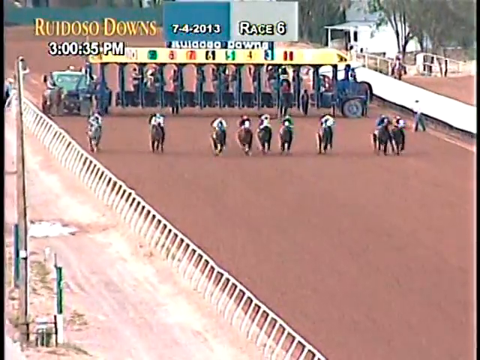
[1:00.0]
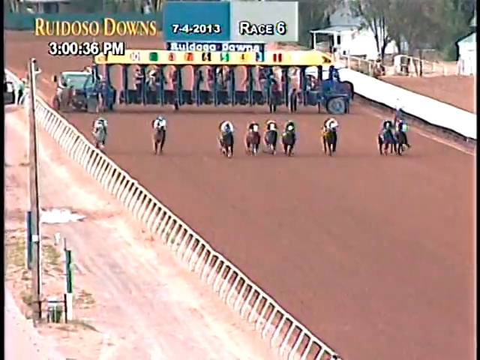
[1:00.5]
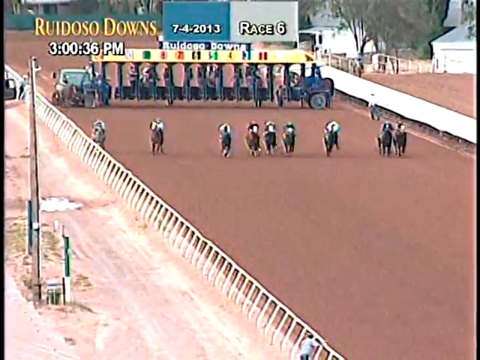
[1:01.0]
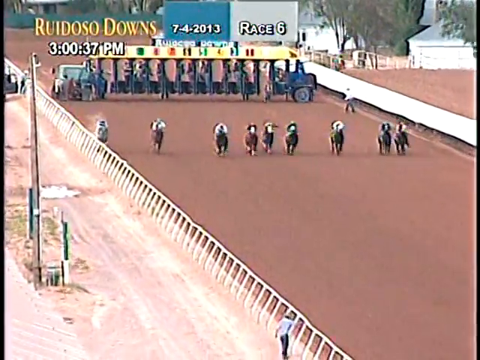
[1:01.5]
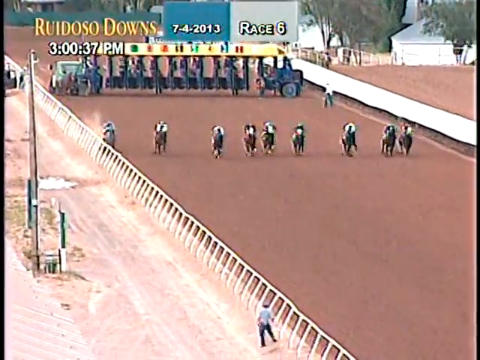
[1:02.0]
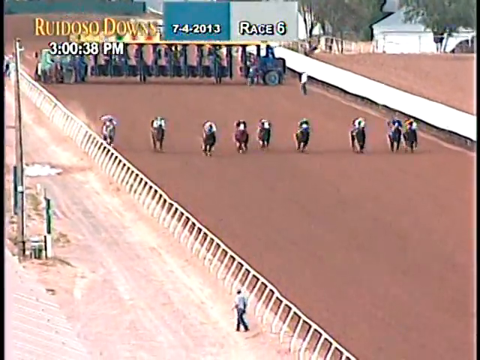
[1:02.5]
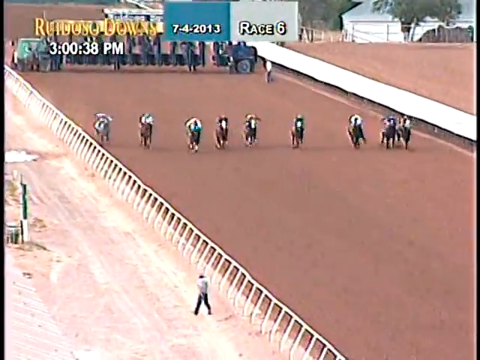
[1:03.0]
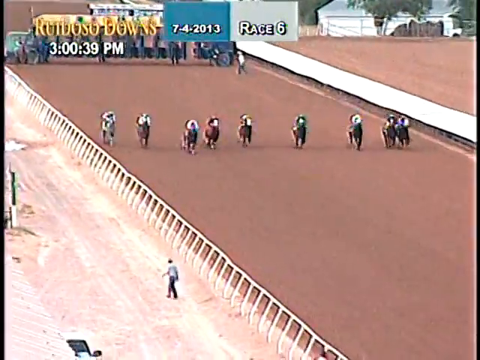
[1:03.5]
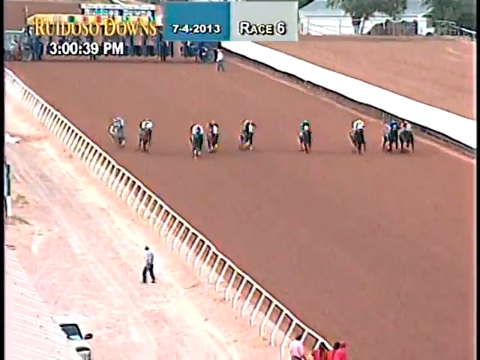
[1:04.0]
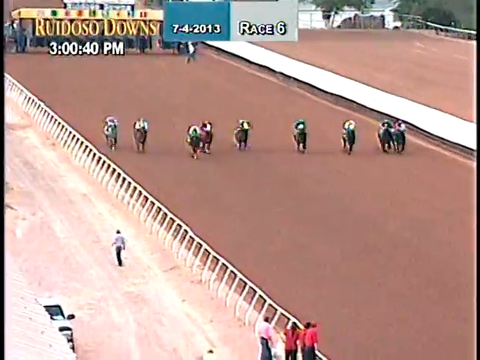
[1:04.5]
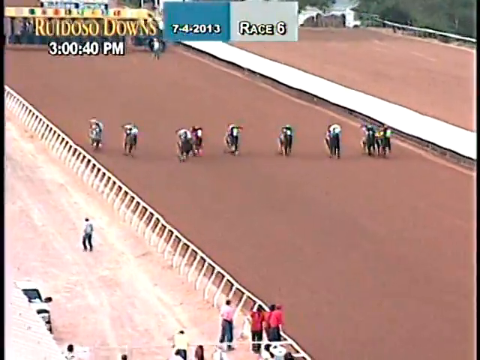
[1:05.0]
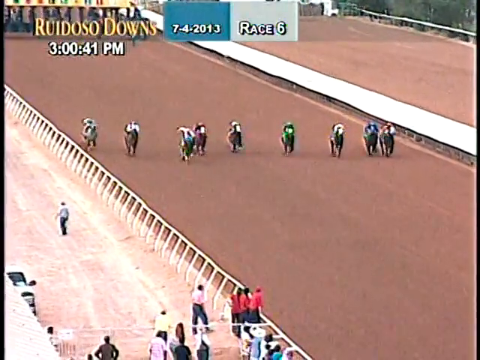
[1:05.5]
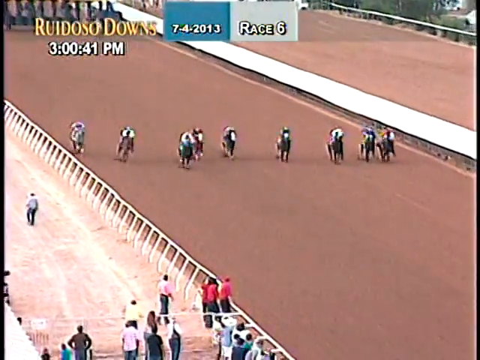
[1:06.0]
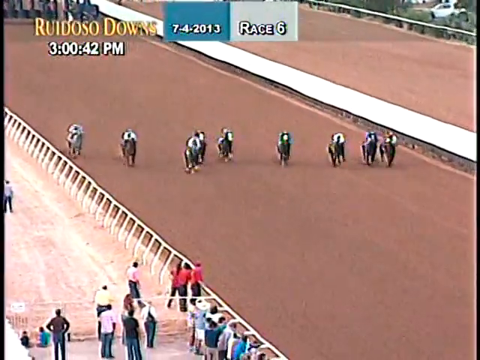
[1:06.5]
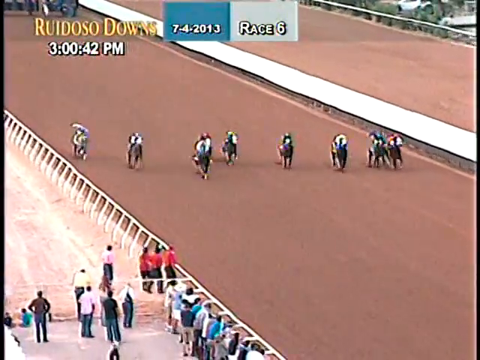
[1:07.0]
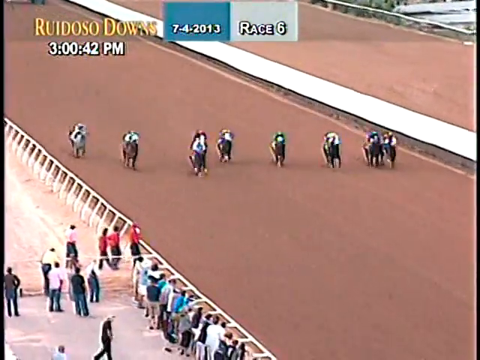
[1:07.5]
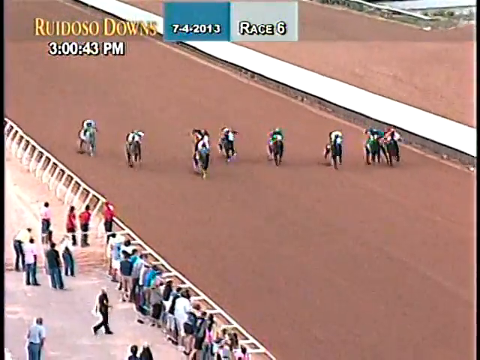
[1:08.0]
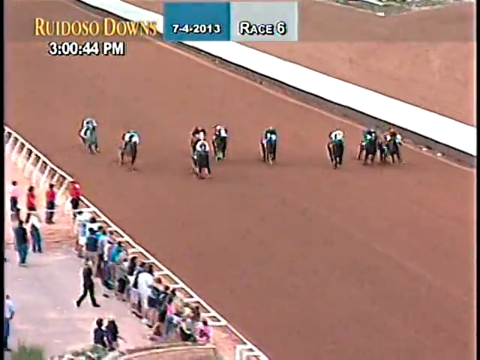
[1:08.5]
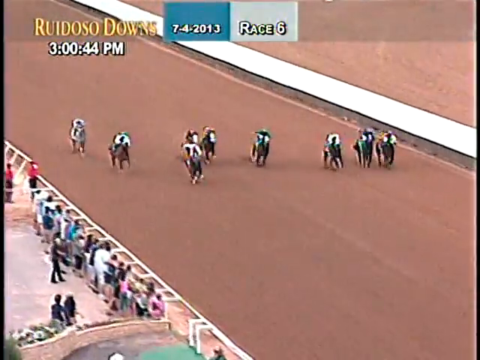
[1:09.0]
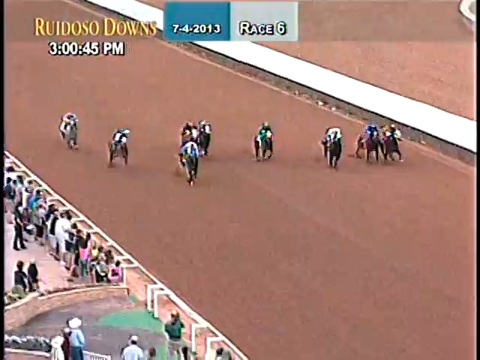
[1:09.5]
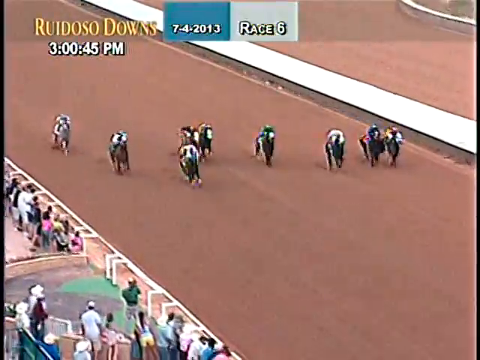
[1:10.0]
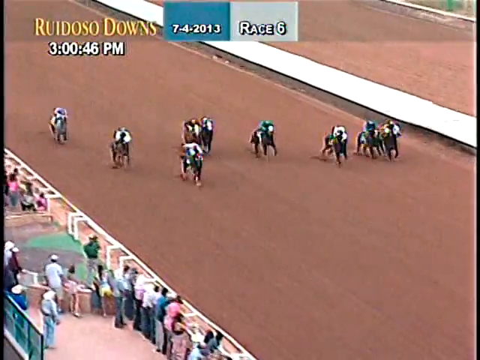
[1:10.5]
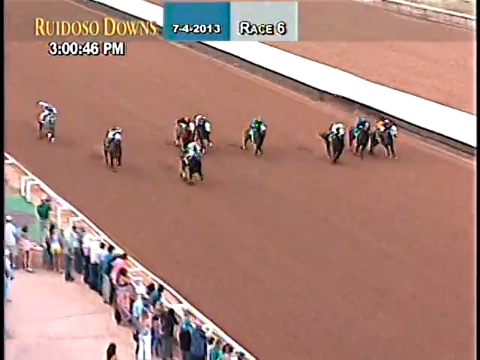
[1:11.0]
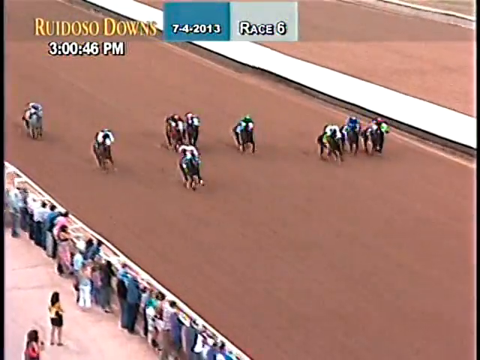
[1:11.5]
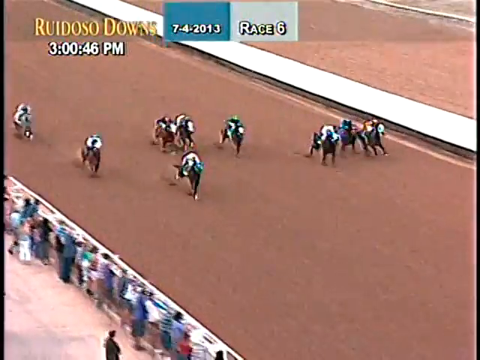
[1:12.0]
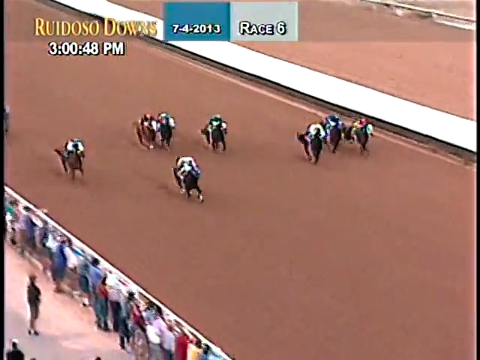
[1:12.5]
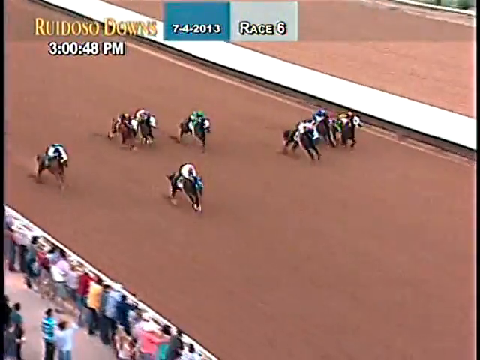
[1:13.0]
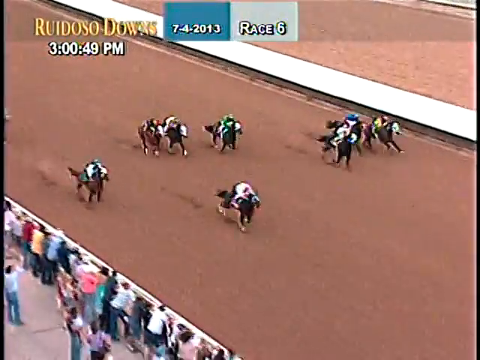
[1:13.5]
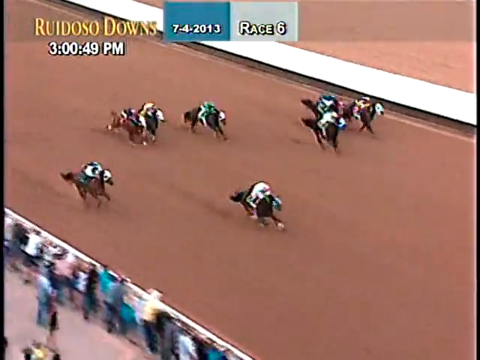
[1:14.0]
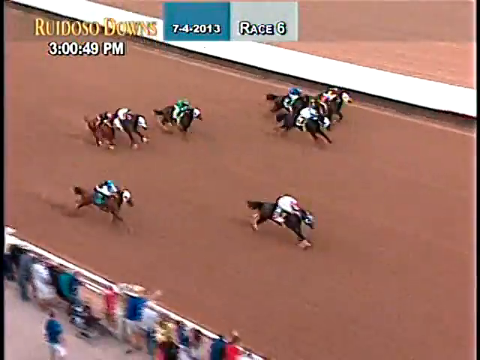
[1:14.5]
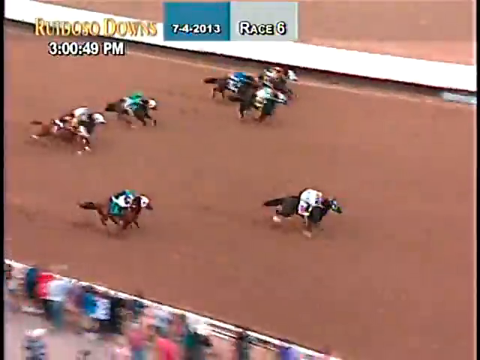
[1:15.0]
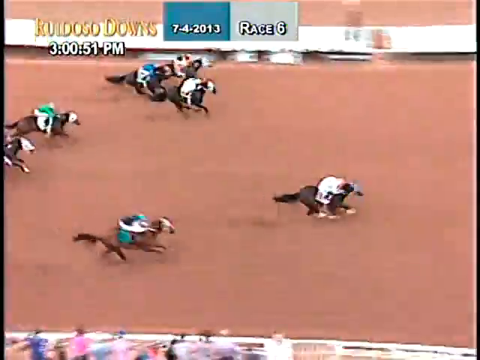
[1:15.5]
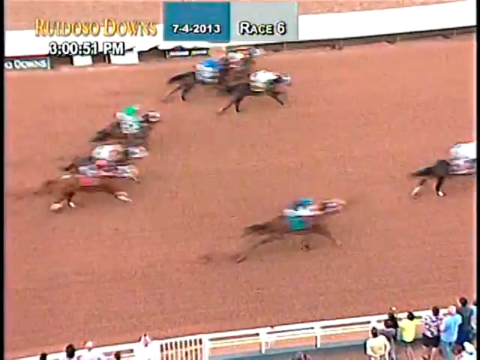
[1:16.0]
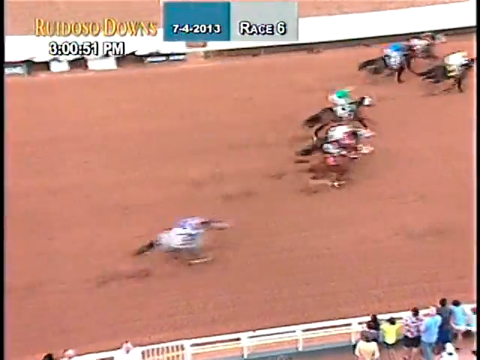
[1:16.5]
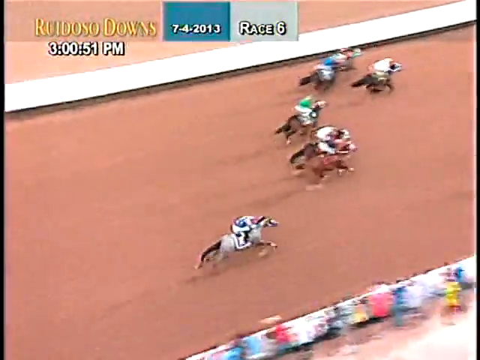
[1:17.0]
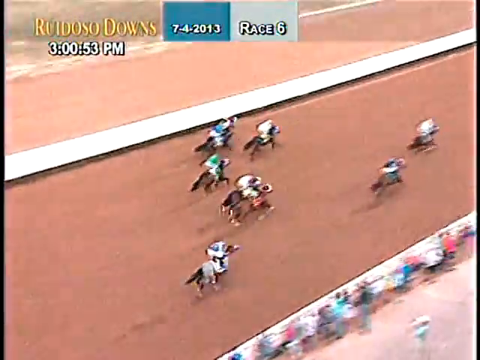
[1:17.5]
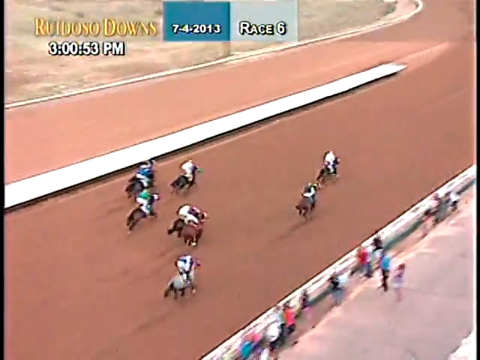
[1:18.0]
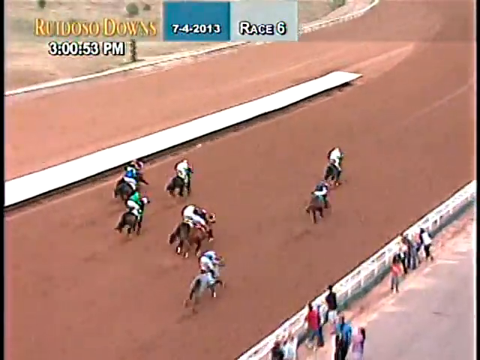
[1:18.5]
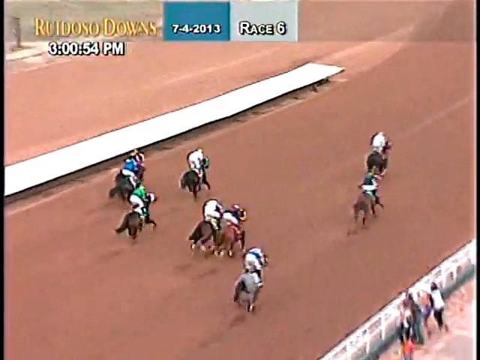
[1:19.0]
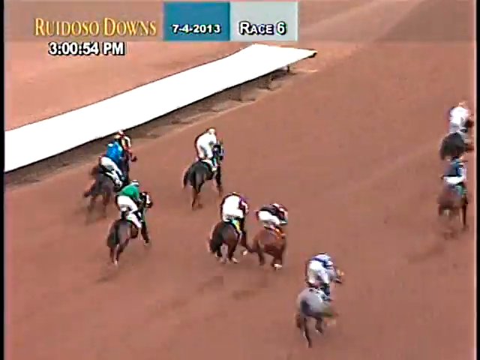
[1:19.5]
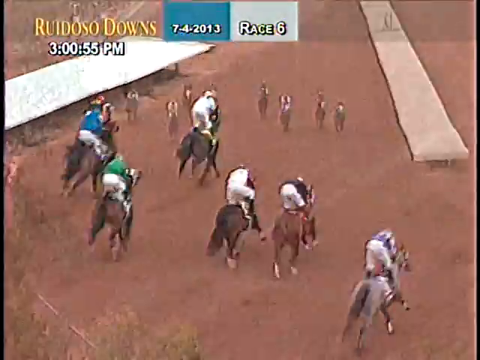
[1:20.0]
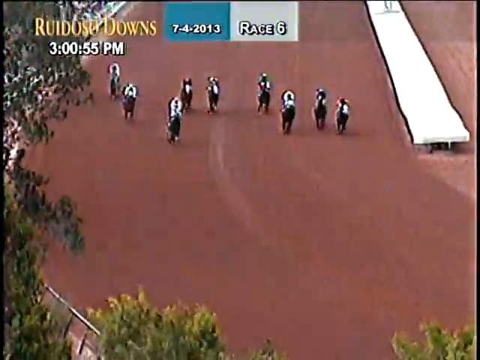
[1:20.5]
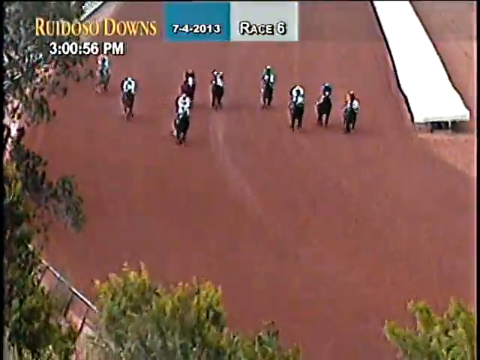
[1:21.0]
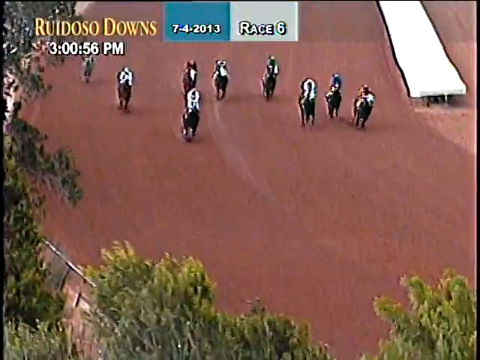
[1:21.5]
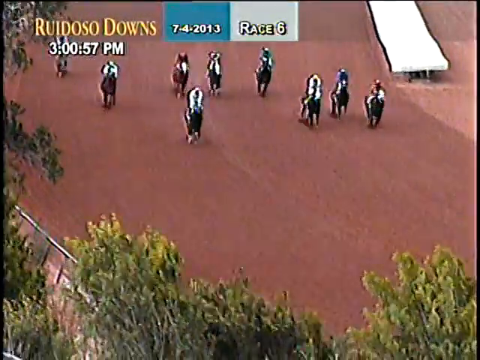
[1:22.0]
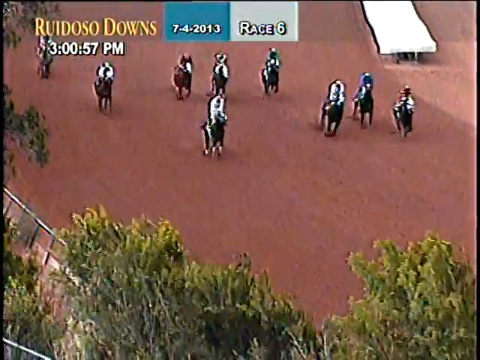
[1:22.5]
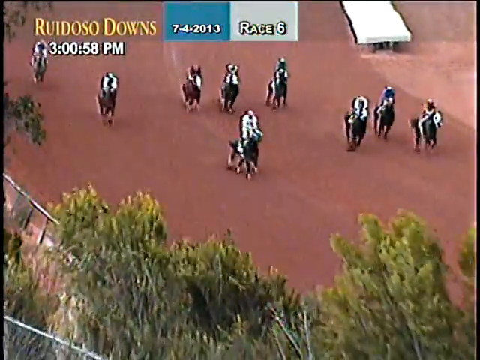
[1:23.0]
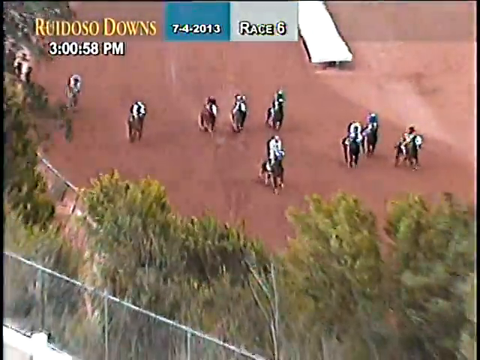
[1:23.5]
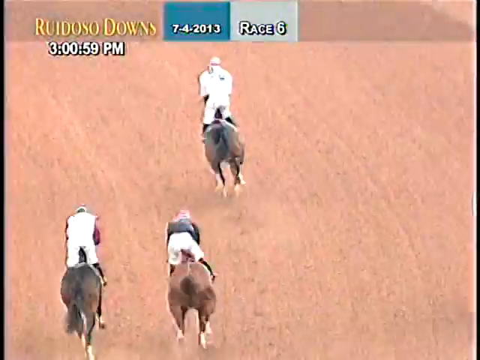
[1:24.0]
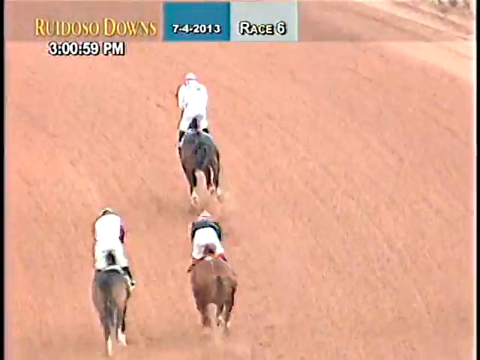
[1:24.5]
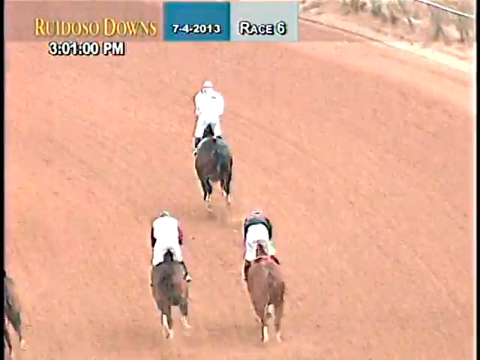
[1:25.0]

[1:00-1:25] The horses have just been let out of their gates, with the gates behind them, labeled 1 through 10, 10 on the left side. They are on a dirt track. The gate is blue with a yellow top. Text along the top of the screen reads "Ruidoso Downs" in yellow, then "7-4-2013, race 6, 3 p.m." in white. The horses sprint down the track, all pretty even at the start, with the jockeys pounding them on. Number 8 looks like it is taking the lead, getting a little further ahead. The first three horses on the right side sort of catch up, and number 8 keeps going. The frame changes to a more overhead view as the horses turn a corner on the dirt track, then changes again to look from behind as they race on down the track.